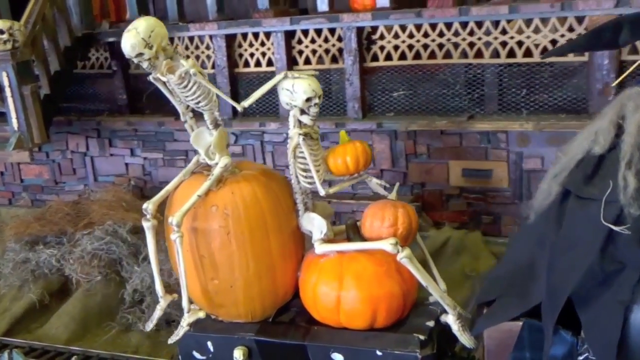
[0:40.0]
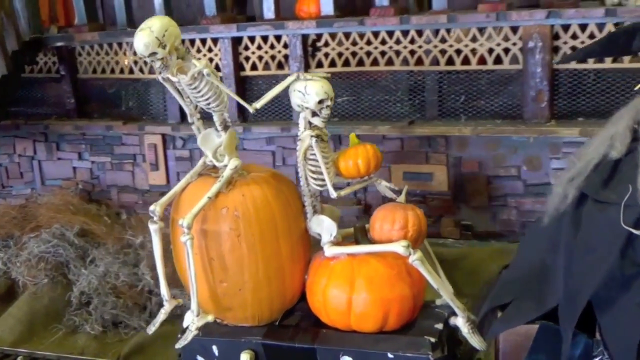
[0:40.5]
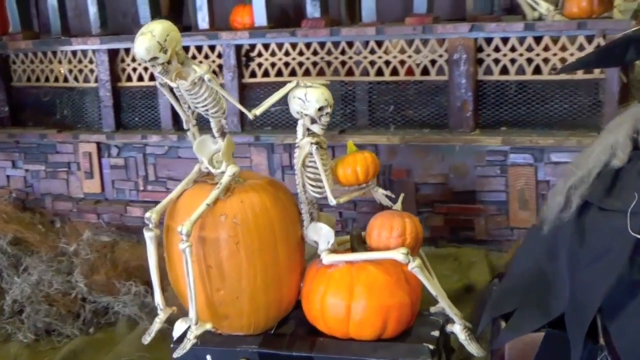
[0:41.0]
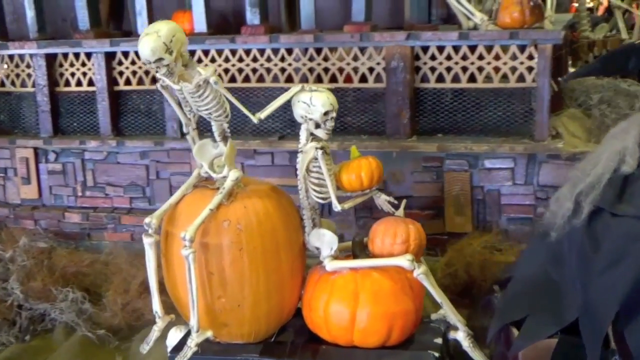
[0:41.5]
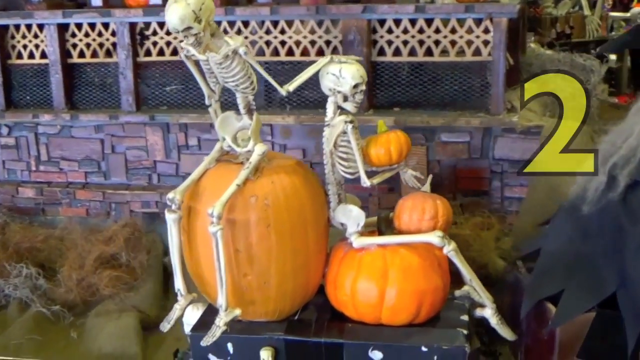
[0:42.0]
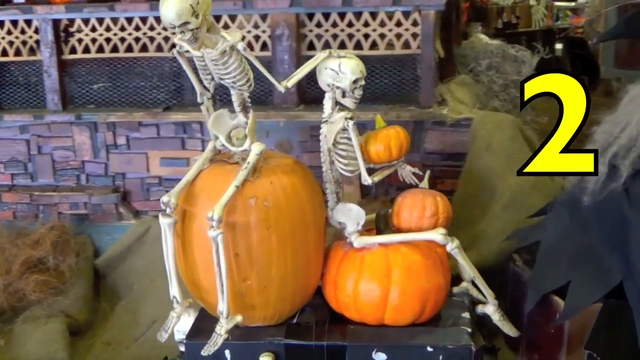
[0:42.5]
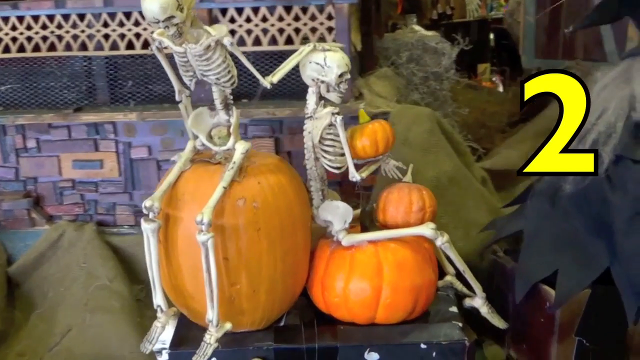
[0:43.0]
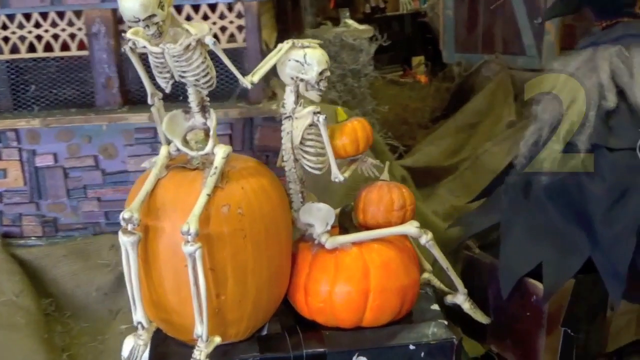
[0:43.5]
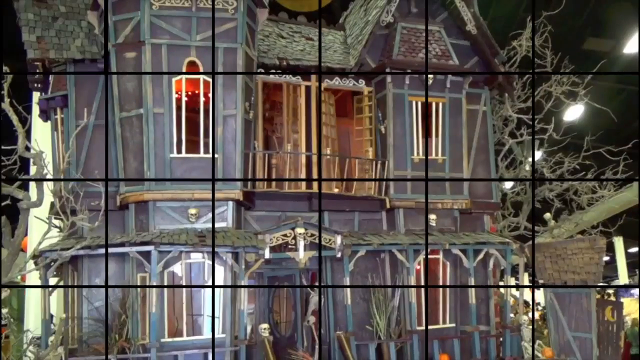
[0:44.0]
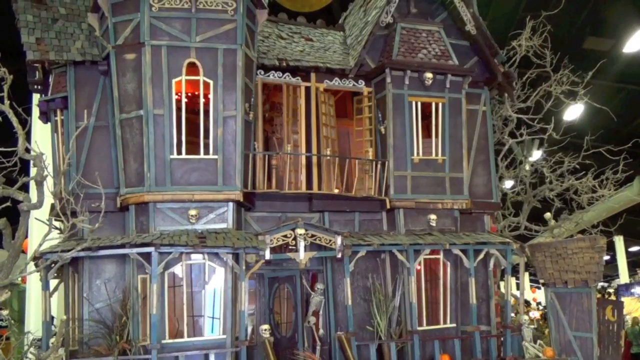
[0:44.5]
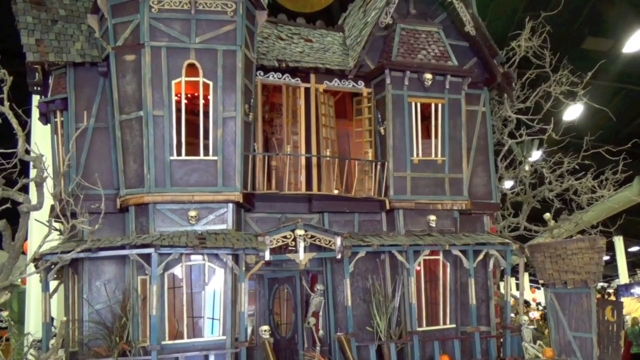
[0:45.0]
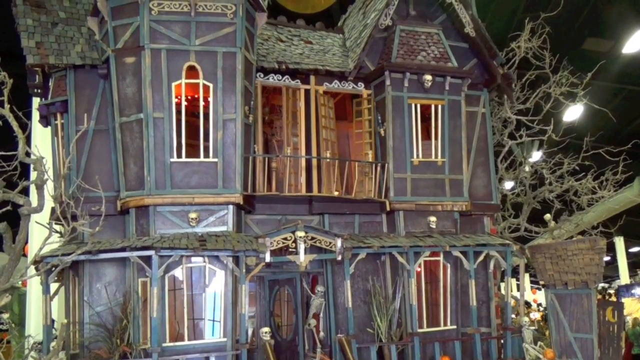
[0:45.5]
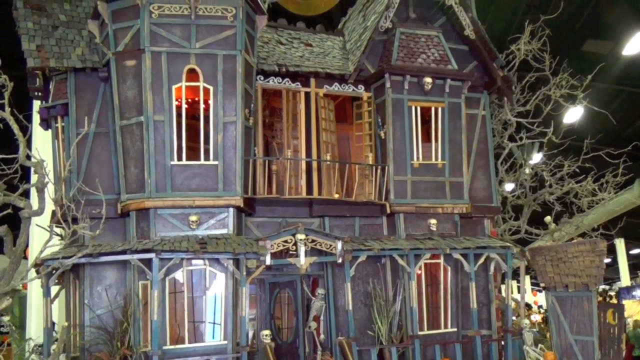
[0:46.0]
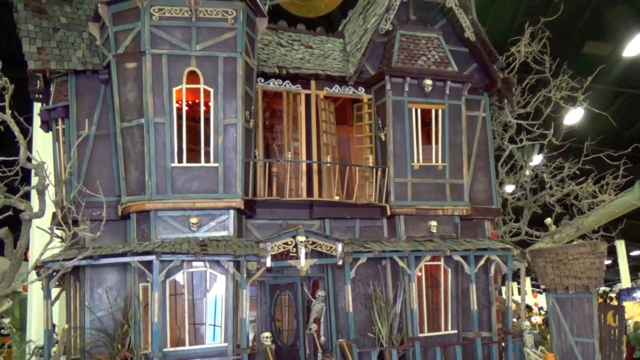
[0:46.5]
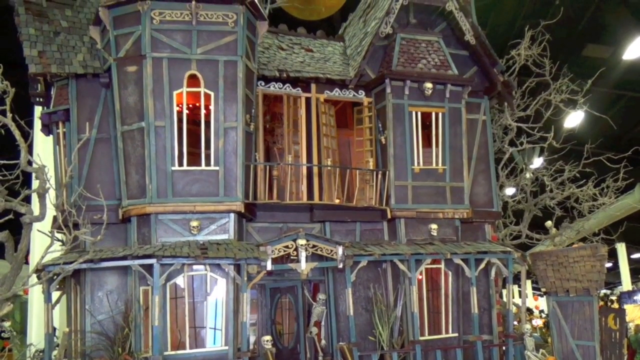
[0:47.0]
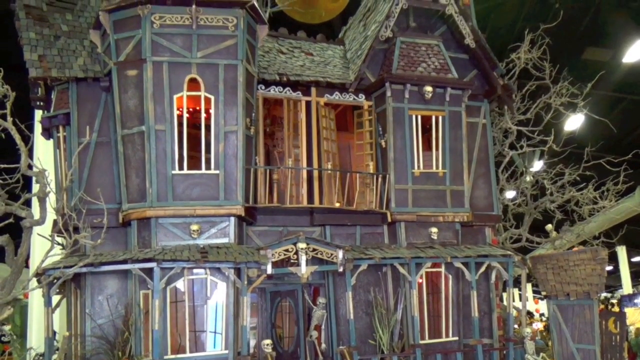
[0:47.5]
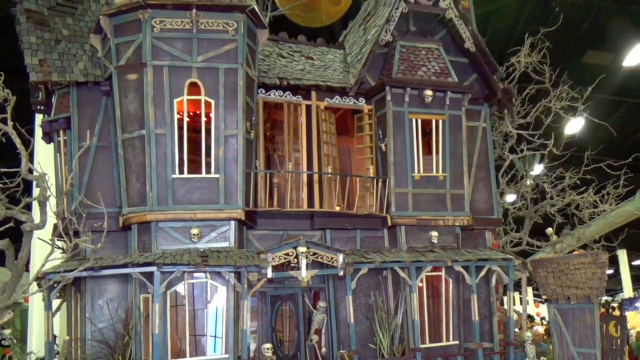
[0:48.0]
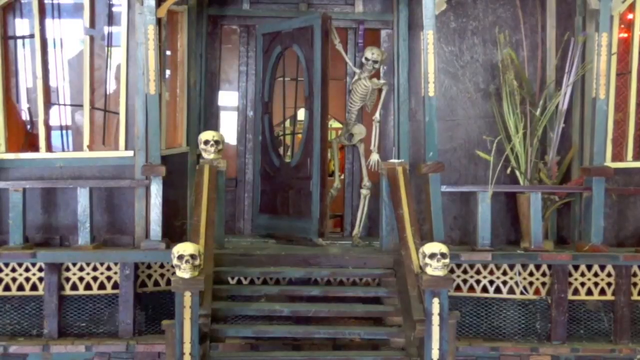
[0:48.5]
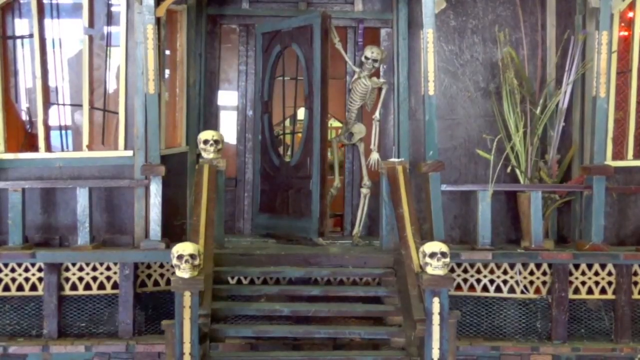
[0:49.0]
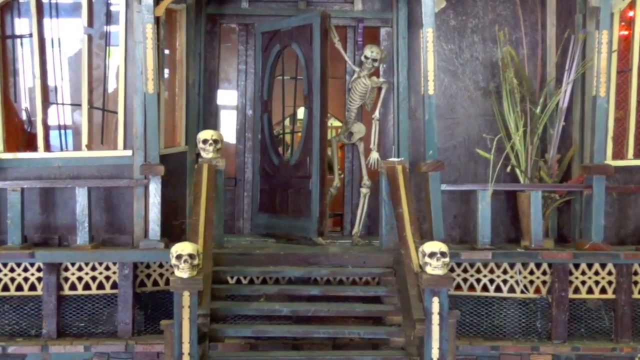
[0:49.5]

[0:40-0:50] The train continues to go by, and behind it there looks to be a low stone wall with some posts on top and a porch railing between the posts. The number 2 appears in yellow text in the upper right corner of the screen. The scene then changes to the side of a haunted mansion, and the camera slowly pans upwards to the front porch. Stairs go up to the porch, and the banister at the bottom of the railing on each side has a skull on it. The front door of the house is partially open, and a skeleton stands inside the door with its right arm up on top of the door, holding it open.